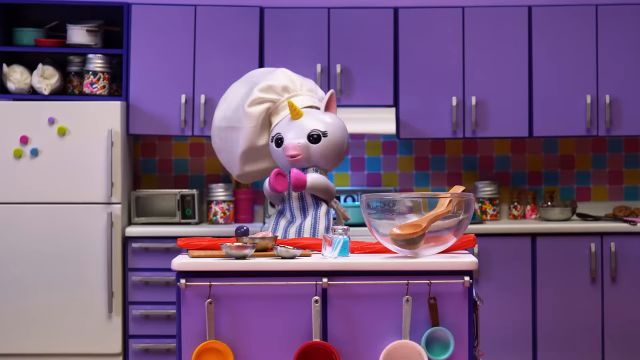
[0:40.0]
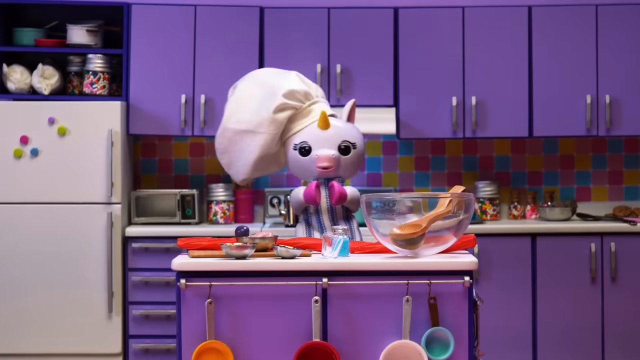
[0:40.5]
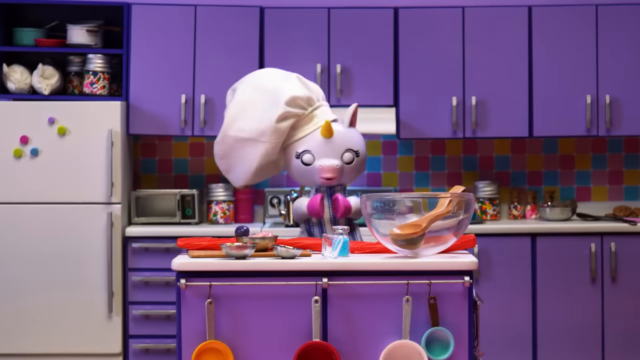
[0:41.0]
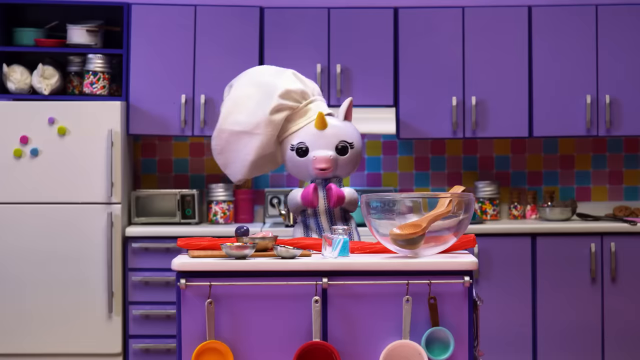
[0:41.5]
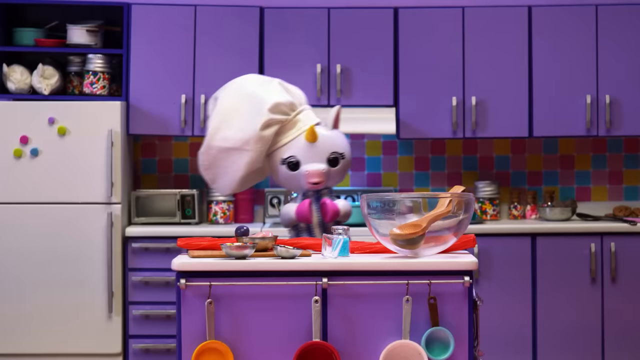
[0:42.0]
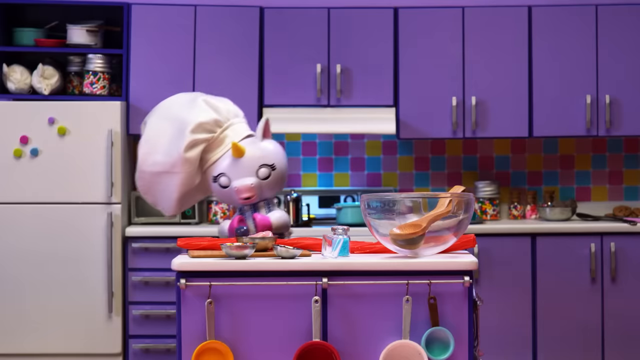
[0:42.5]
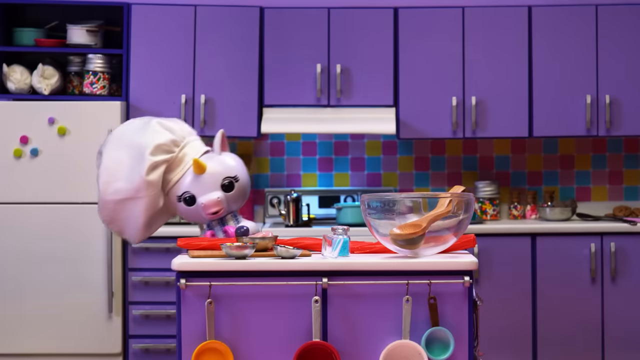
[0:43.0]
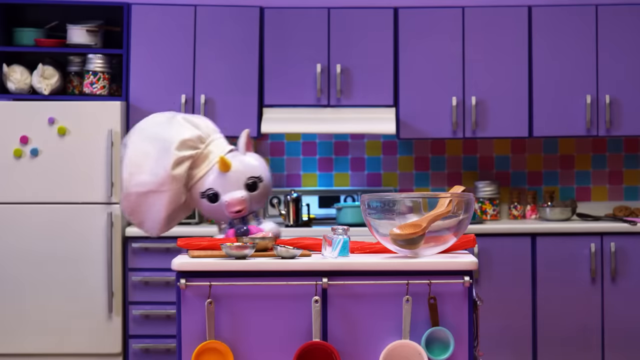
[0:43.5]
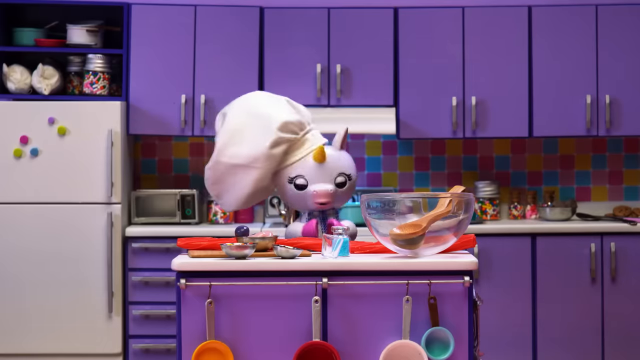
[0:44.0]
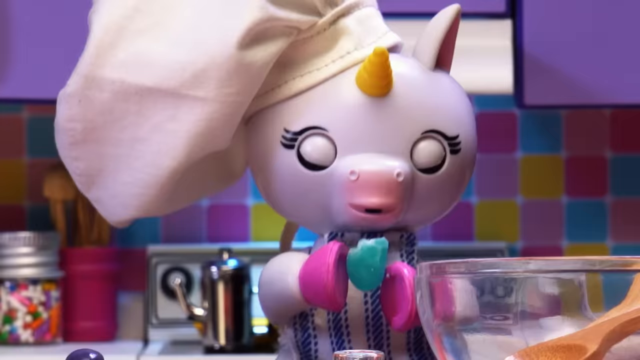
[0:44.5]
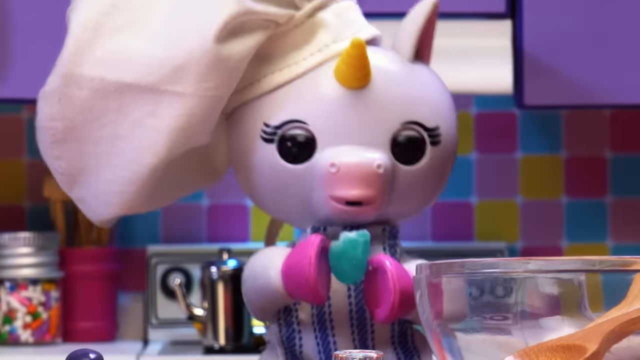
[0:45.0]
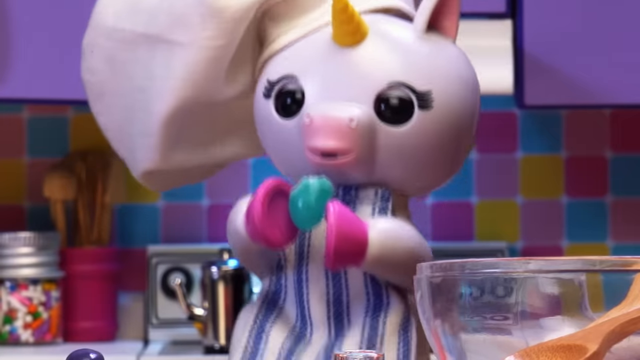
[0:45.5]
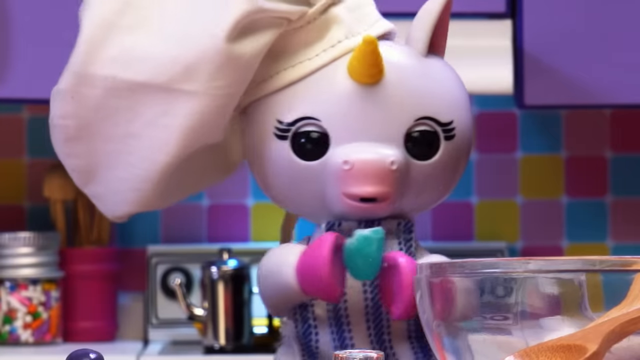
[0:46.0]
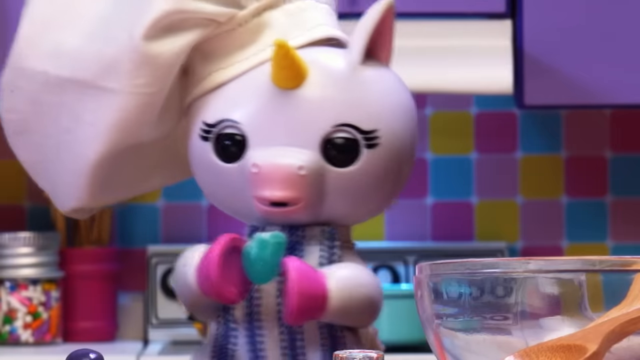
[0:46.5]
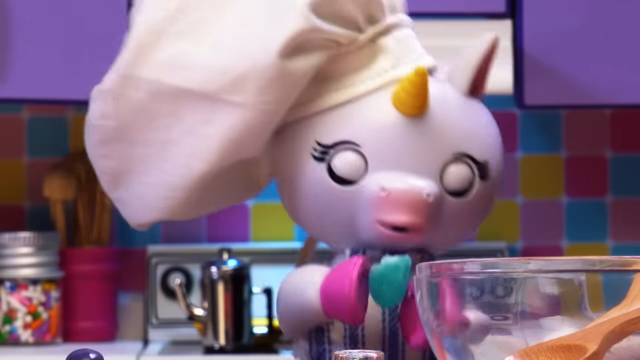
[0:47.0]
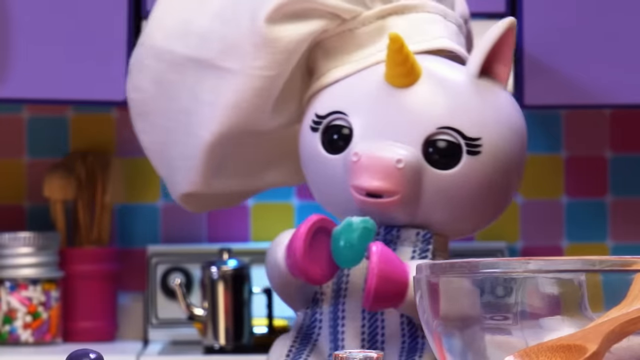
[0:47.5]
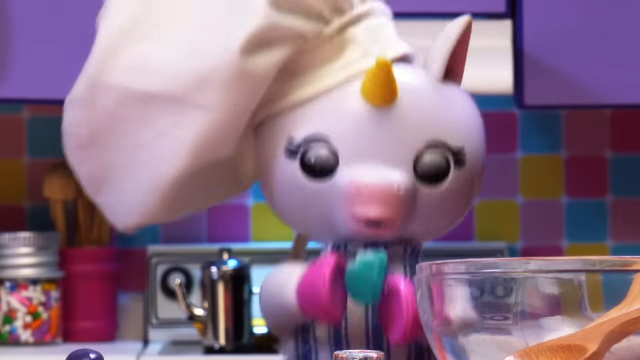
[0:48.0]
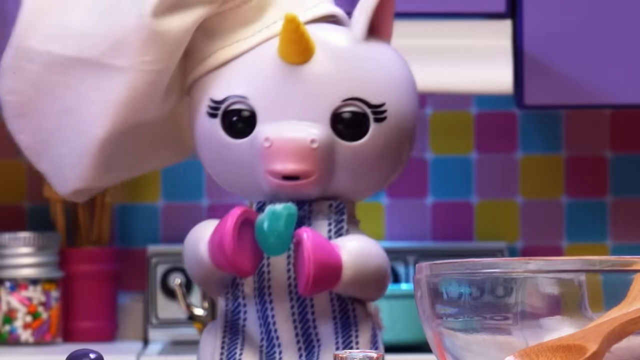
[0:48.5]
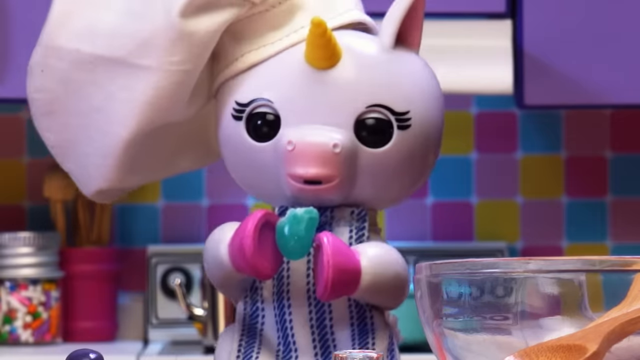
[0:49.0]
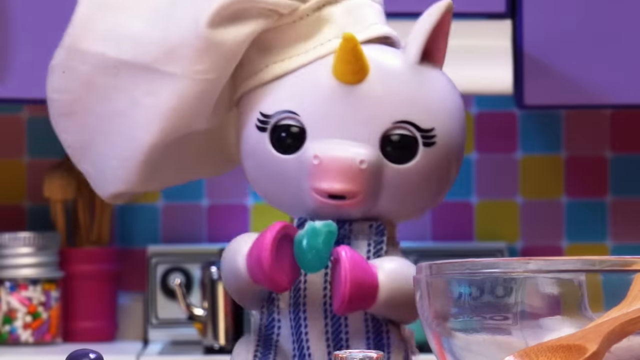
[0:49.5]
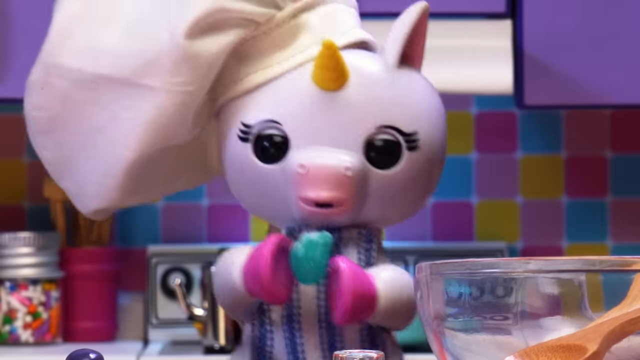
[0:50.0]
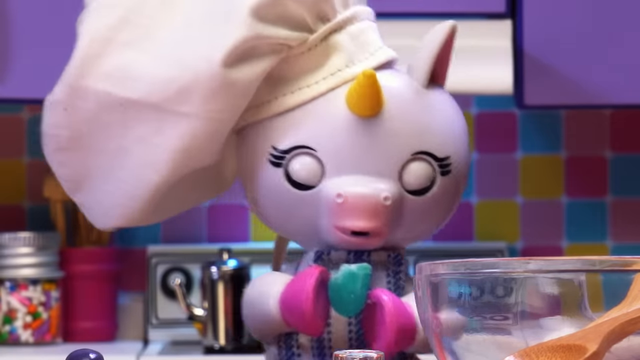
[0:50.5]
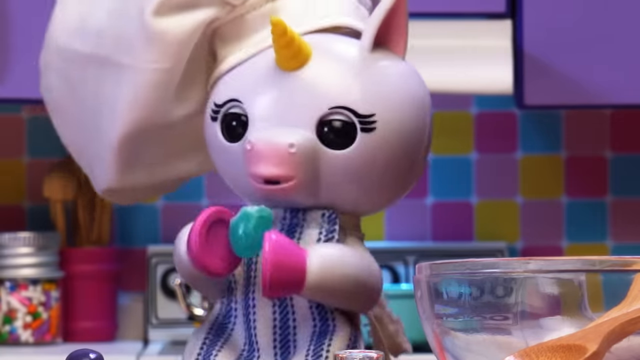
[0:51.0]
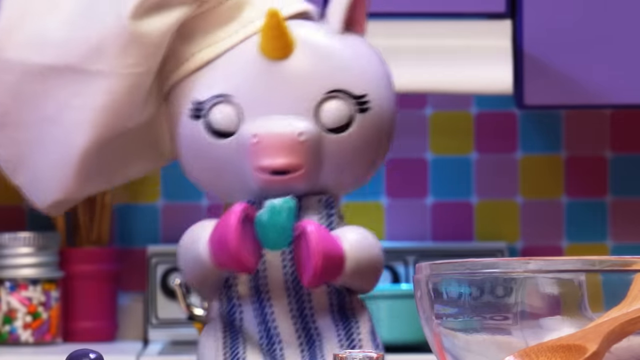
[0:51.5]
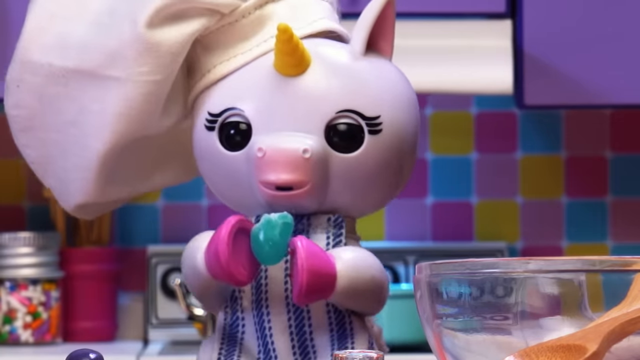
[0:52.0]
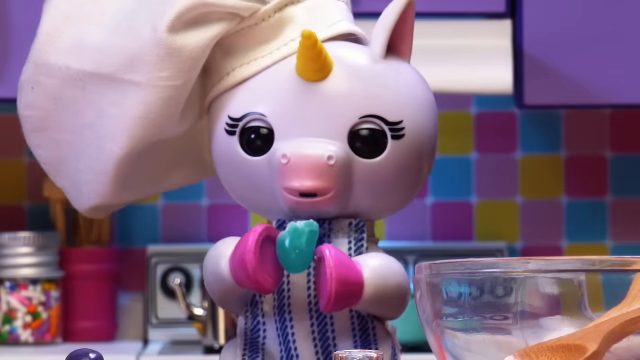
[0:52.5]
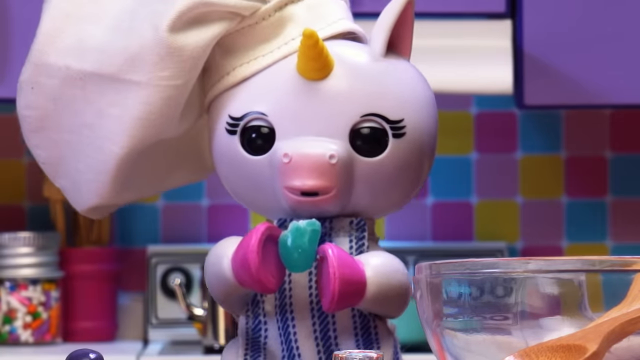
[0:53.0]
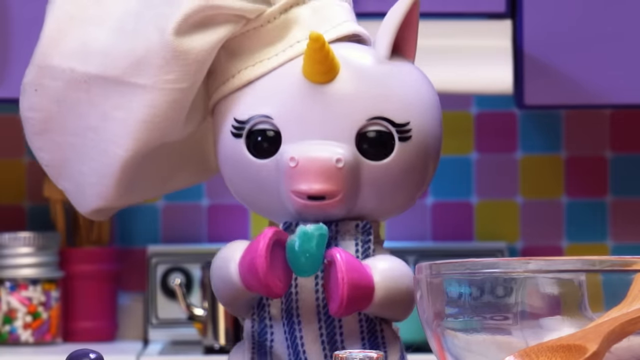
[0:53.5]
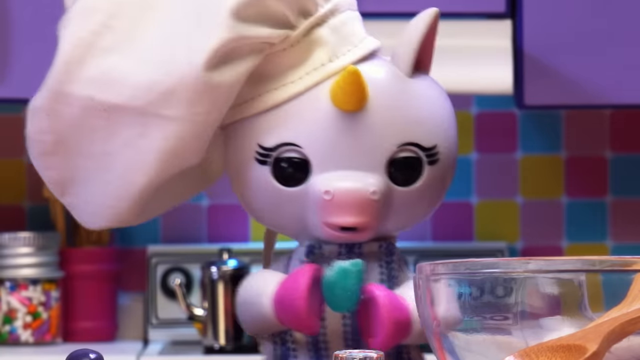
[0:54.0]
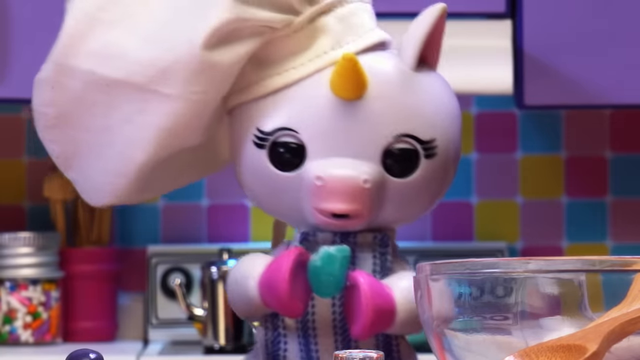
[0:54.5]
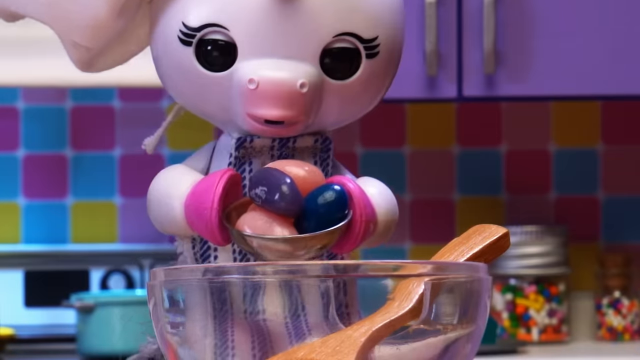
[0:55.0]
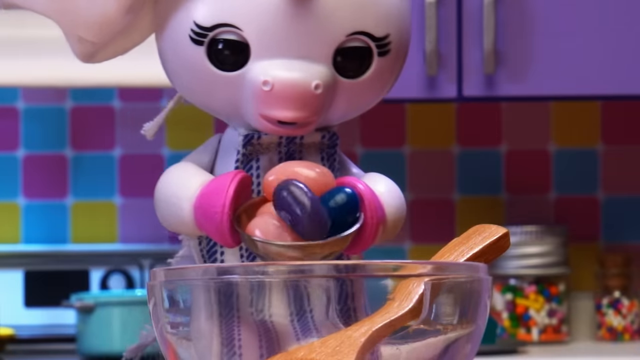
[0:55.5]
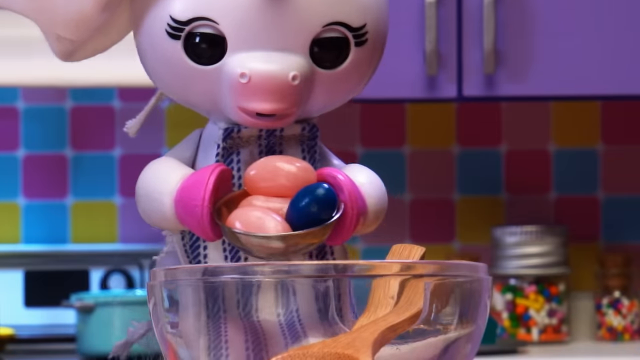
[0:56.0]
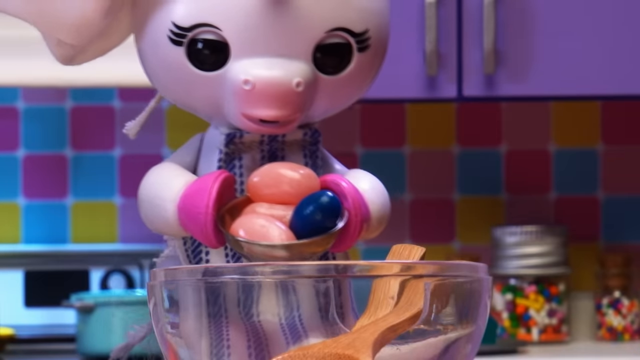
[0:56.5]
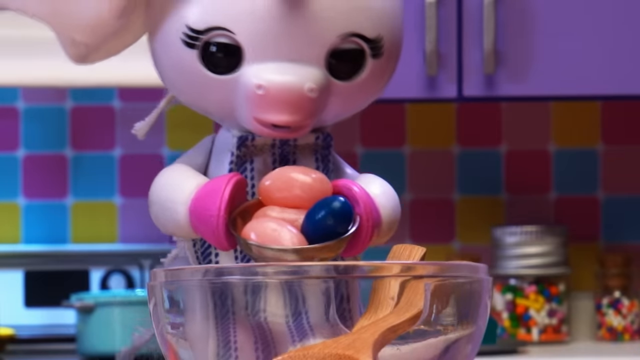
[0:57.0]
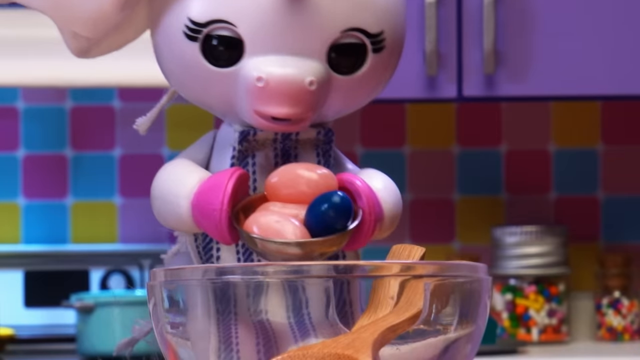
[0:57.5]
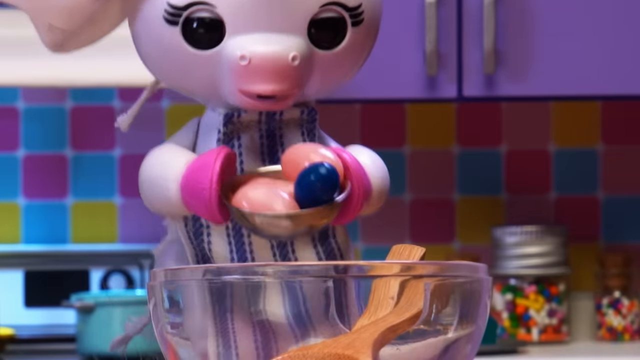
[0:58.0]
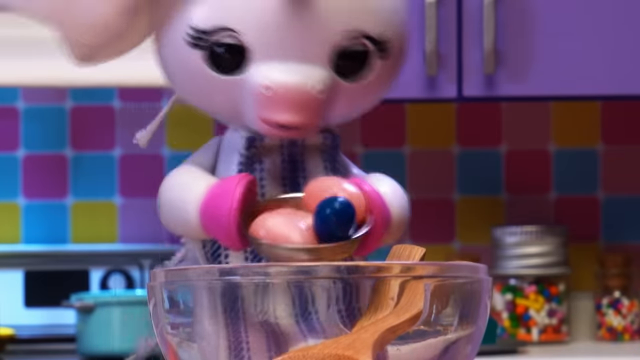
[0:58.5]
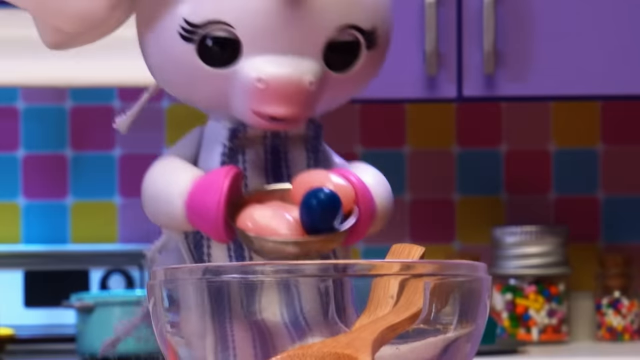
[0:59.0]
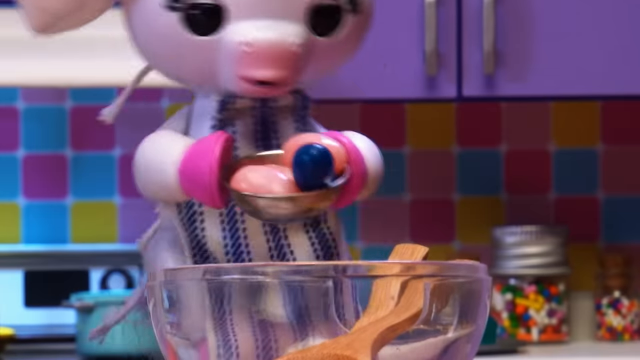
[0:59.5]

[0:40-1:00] The unicorn is still speaking, then kind of bends down and grabs something off the island counter. The camera kind of zooms in on her as she holds something light blue in both hooves, continuing to speak, moving her head, blinking, and moving from side to side with the blue thing in her hooves. The video cuts to another close-up in which the top of the glass bowl with the wooden spoon inside is visible. She stands in the middle of the shot holding one of the metal bowls, which seems to be filled with jelly beans: a purple one, a blue one and some pink ones. She dumps the jelly beans into the glass bowl, and they fall in one by one as she shakes the metal bowl in her hooves.